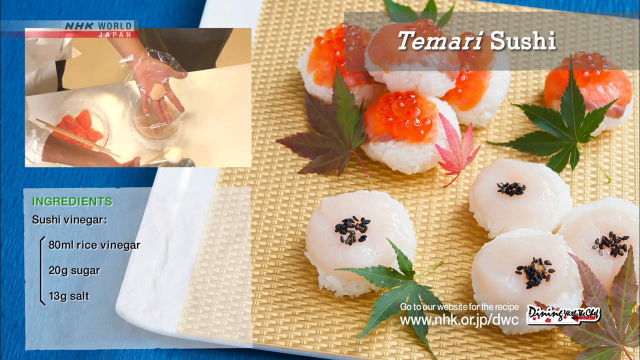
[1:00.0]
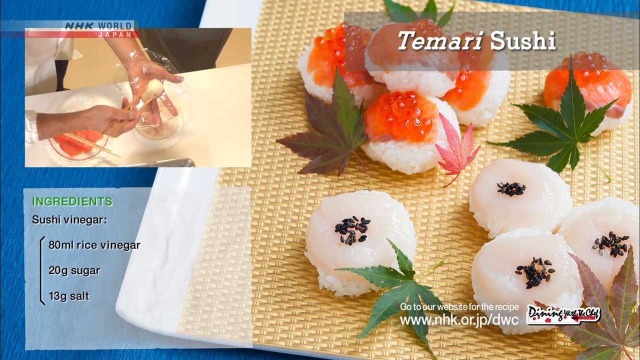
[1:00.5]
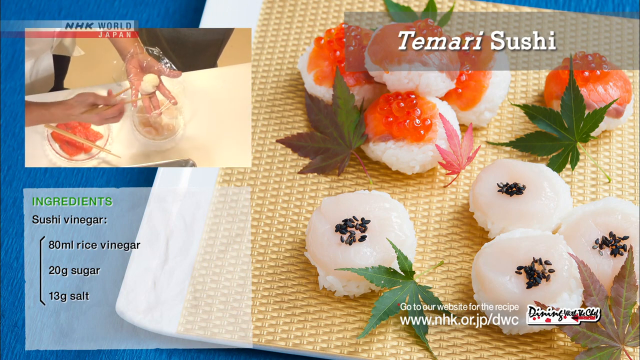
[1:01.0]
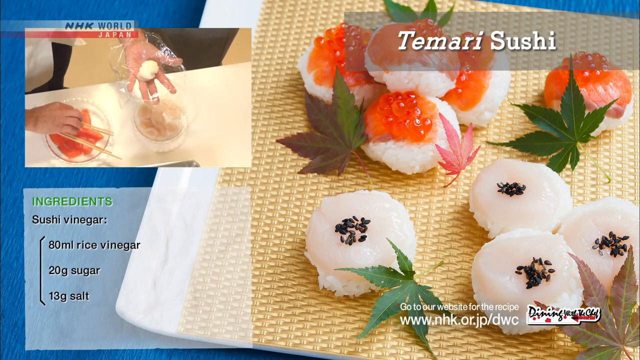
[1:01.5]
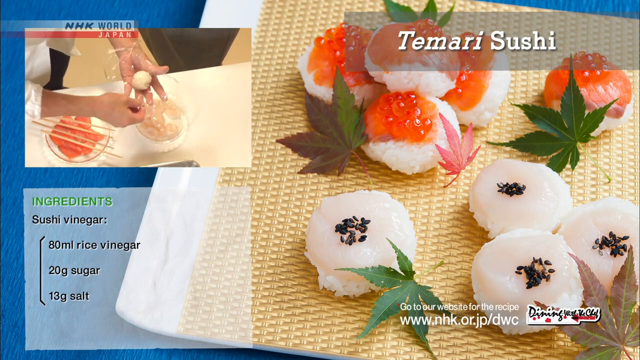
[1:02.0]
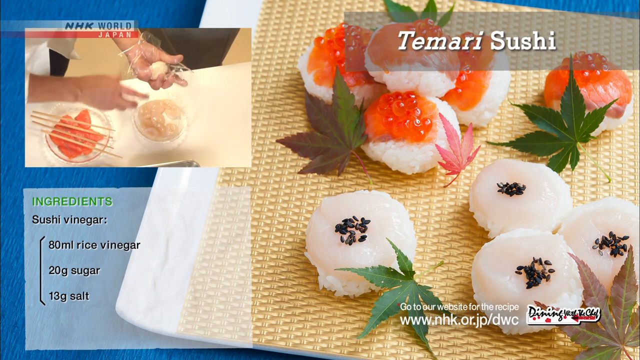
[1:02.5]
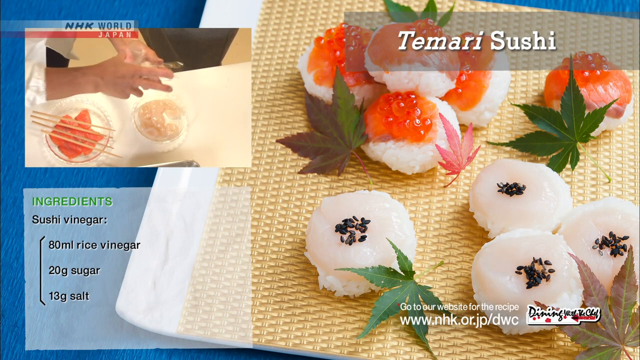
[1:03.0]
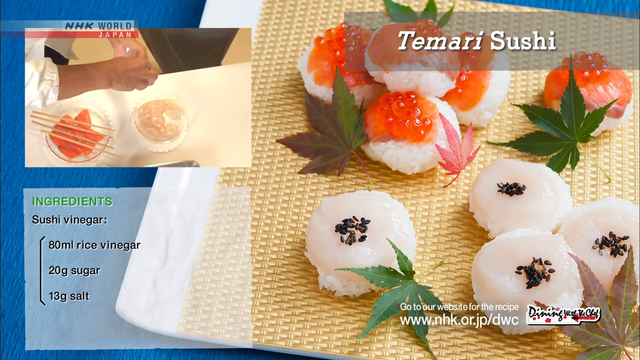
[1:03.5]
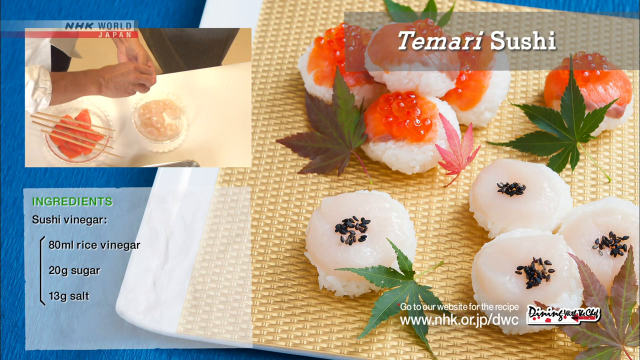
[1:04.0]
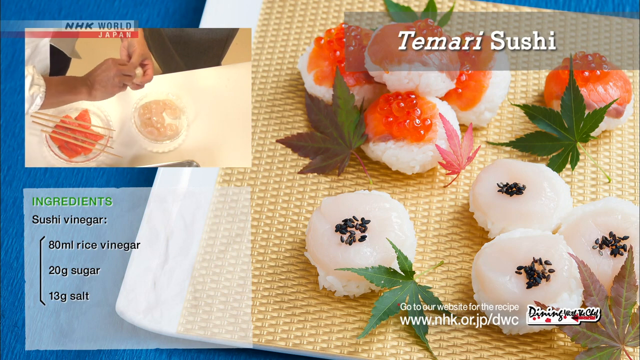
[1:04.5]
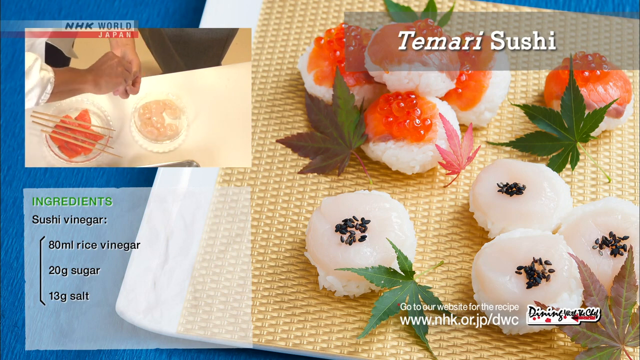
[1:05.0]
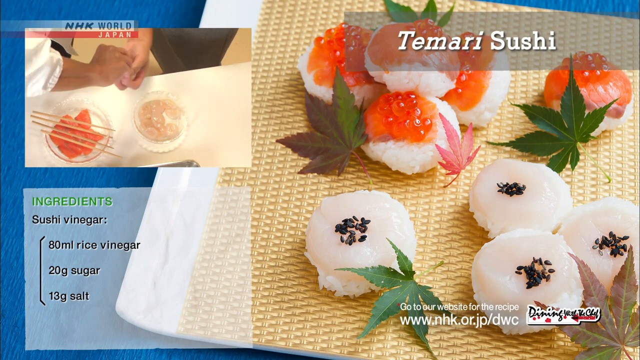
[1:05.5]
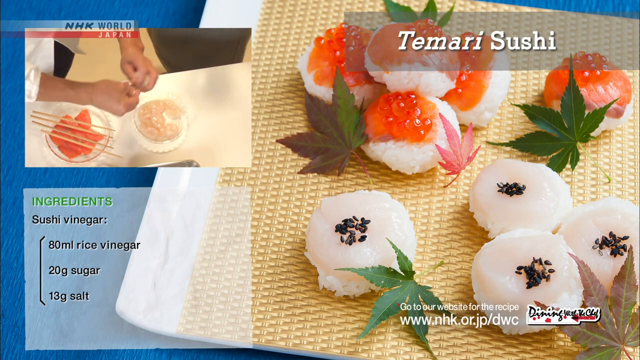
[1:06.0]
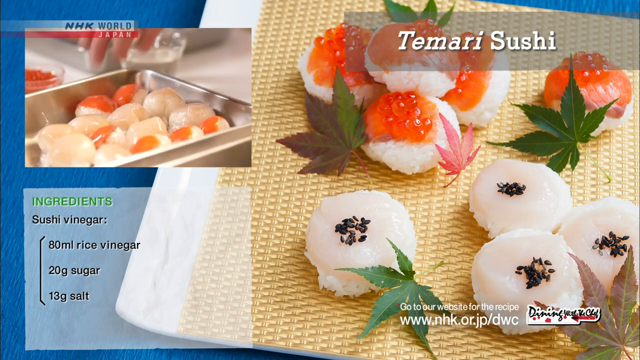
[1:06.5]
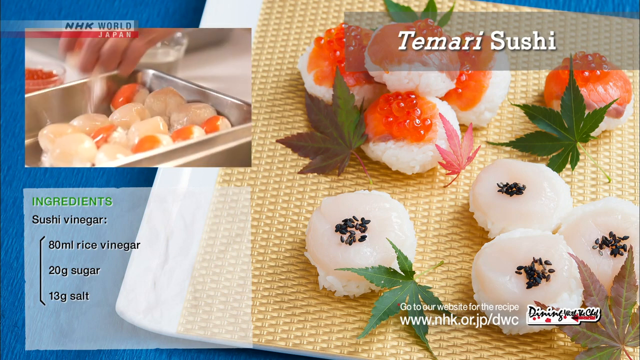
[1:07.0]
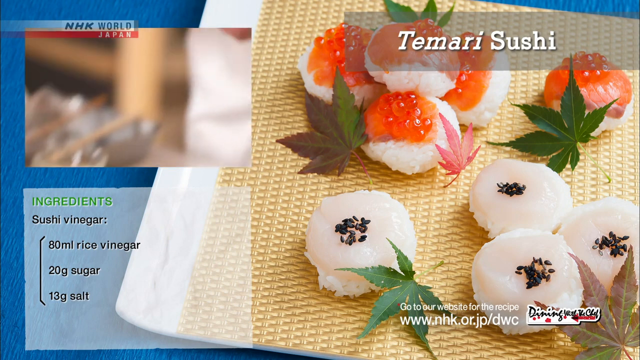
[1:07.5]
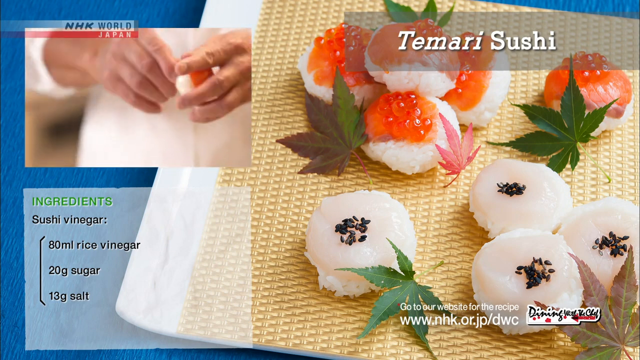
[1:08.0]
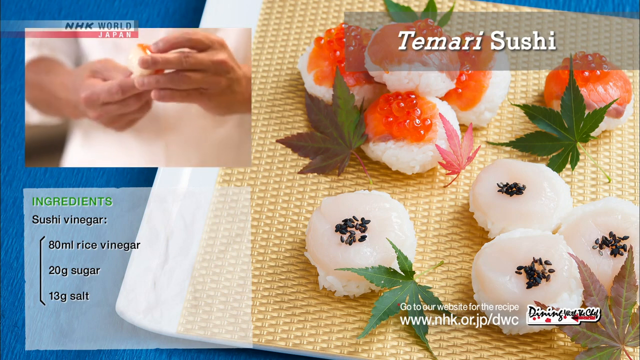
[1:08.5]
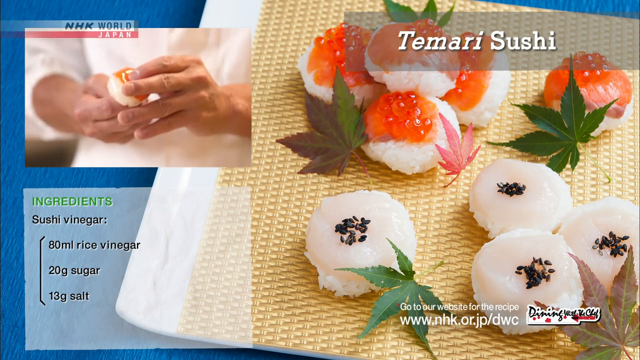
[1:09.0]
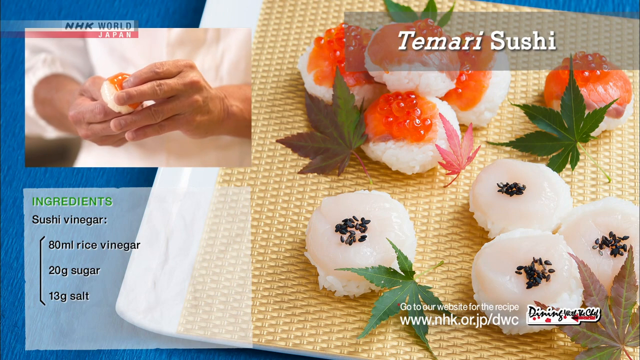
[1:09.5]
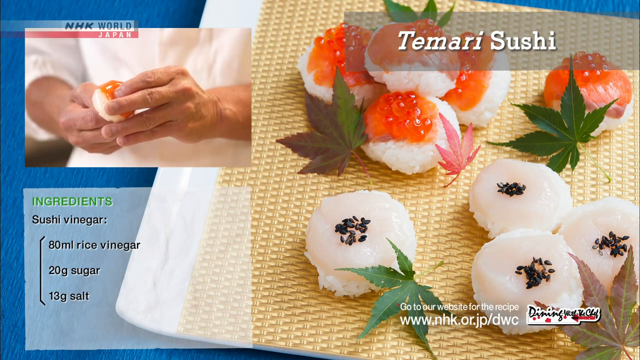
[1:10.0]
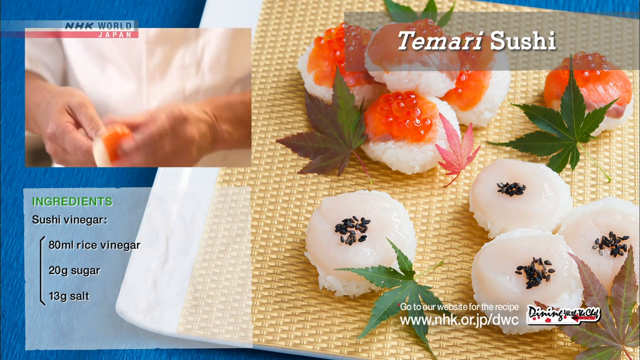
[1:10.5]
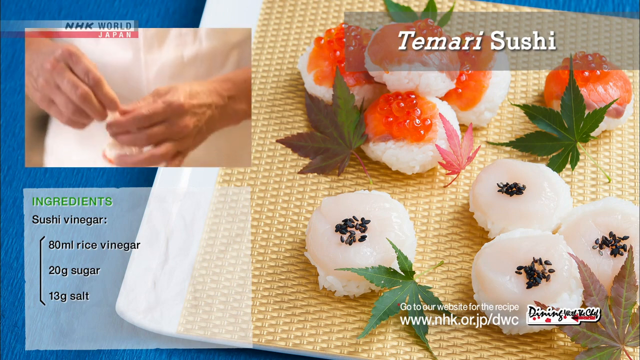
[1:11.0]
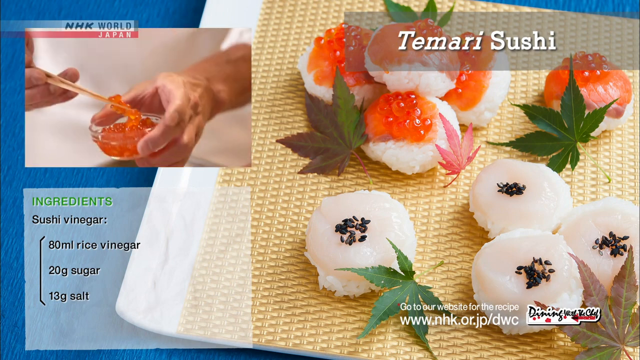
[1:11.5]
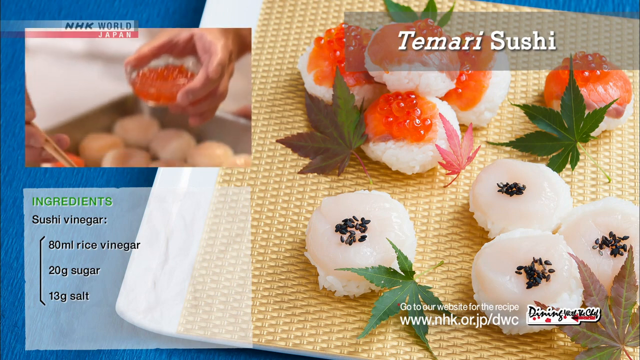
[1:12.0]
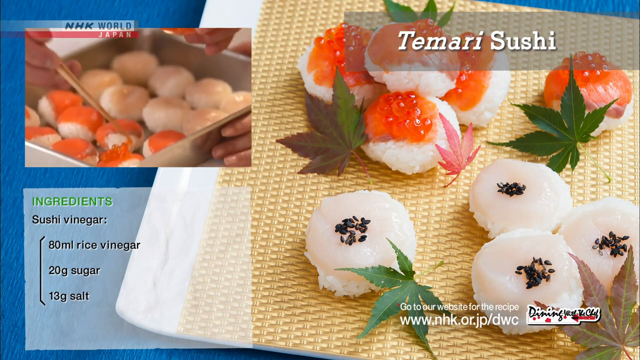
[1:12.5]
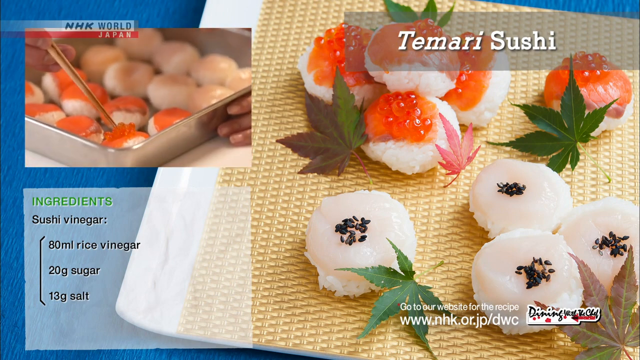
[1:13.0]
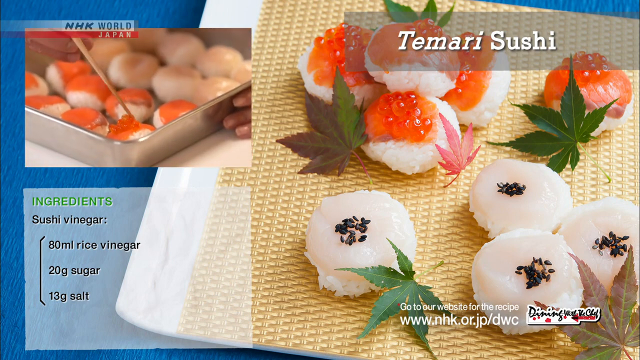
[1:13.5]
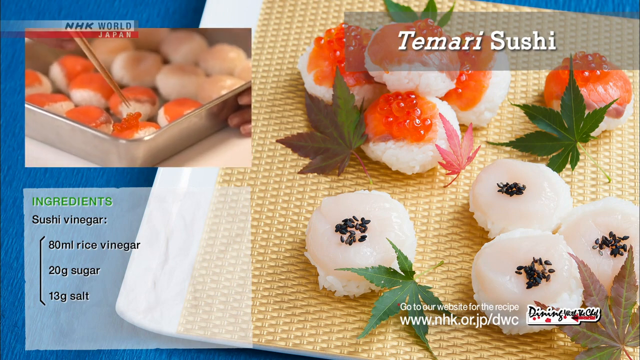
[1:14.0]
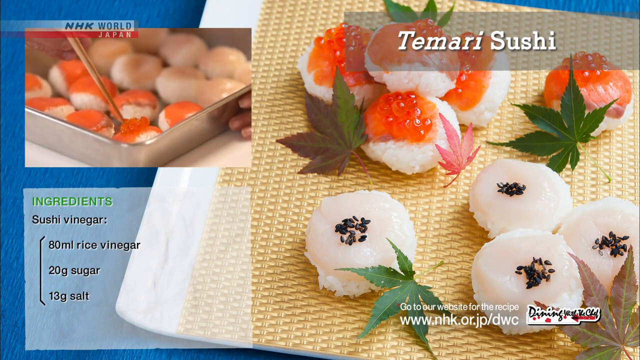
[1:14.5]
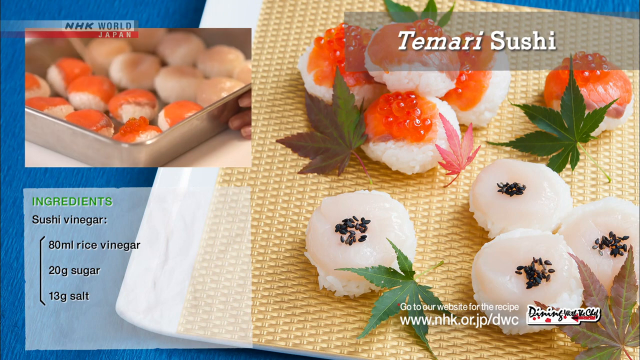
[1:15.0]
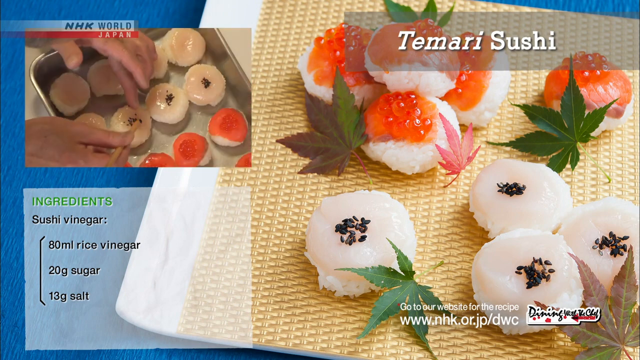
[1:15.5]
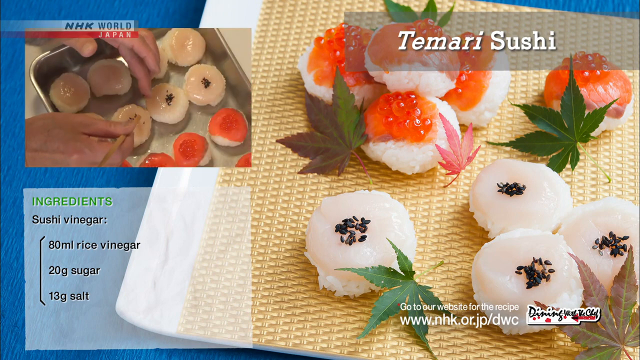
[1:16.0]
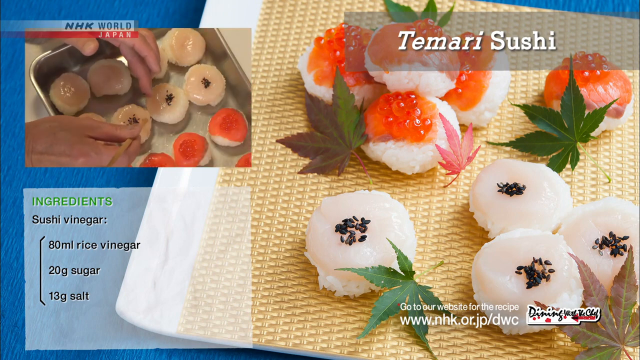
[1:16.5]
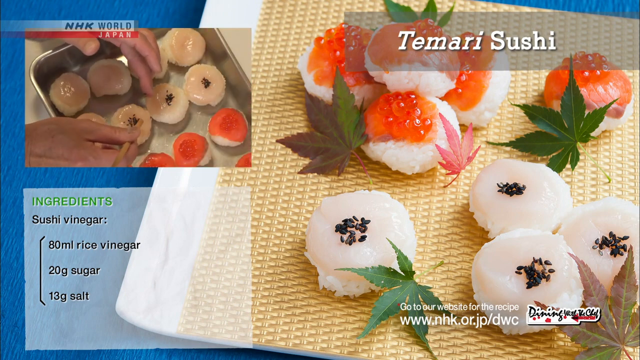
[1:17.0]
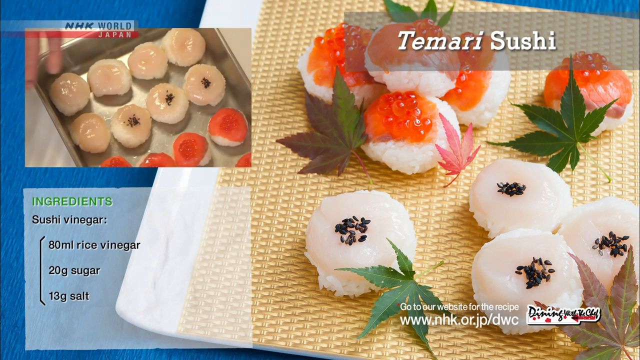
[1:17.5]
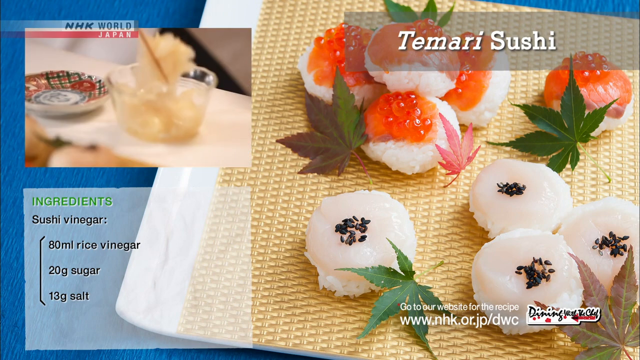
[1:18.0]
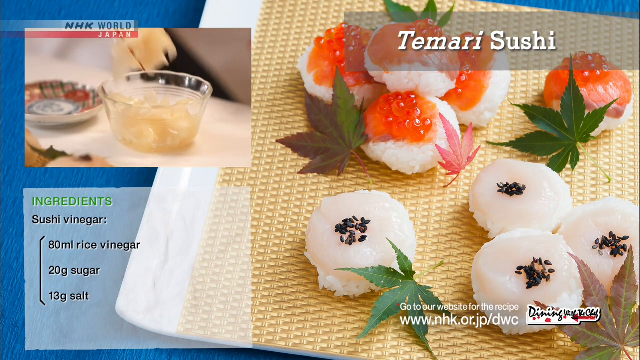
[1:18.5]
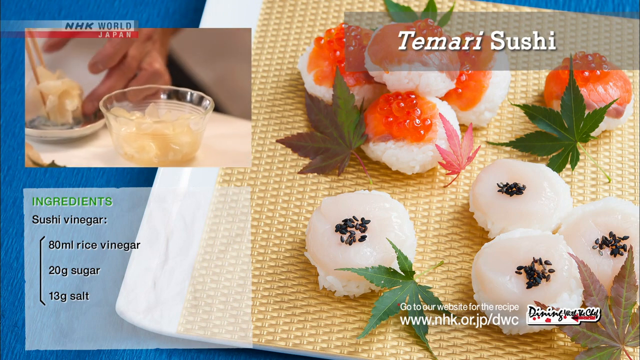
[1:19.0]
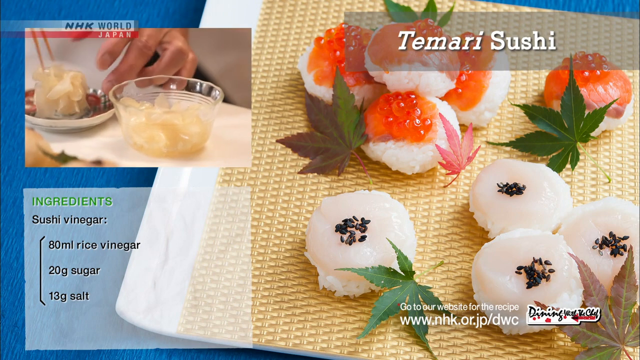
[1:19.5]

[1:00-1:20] The image of tamari sushi is still shown: one is a white rice ball with a piece of smoked salmon and salmon roe on top, the other a ball of white rice with a piece of scallop and black sesame seeds on top. On the right-hand side of the image, these pieces of sushi are on a bamboo sheet with decorative leaves between them. In the bottom left-hand corner is an ingredient list for sushi vinegar: 80 milliliters of rice vinegar, 20 grams of sugar, and 13 grams of salt. In the top left-hand corner, the chef shows how to make the sushi. With a piece of plastic wrap in his hands, he places either a piece of salmon or a piece of scallop onto the wrap, places one of the pre-made white rice balls on top, and twists the plastic wrap to create a very tight ball. After removing the plastic wrap, he places the tight balls into a container. Using chopsticks, he places salmon roe on top of the salmon balls and black sesame seeds on top of the scallop balls. Finally, he places sweet pickled ginger into a dish.